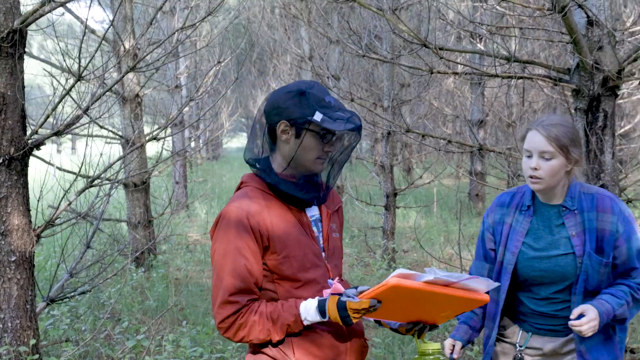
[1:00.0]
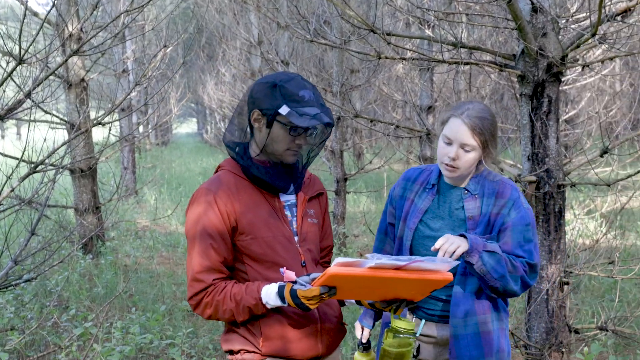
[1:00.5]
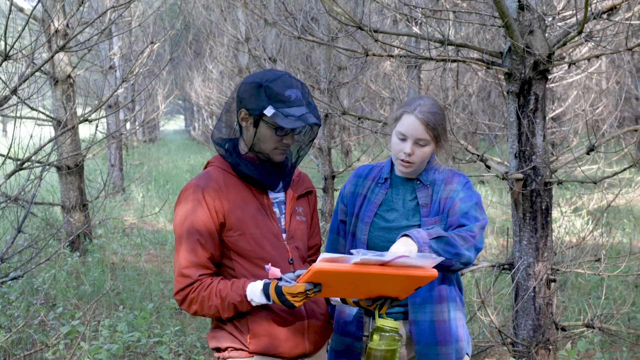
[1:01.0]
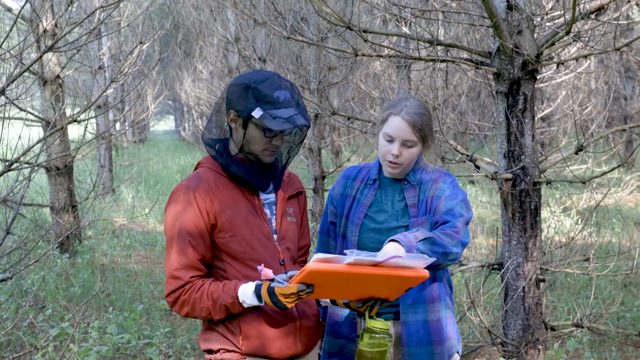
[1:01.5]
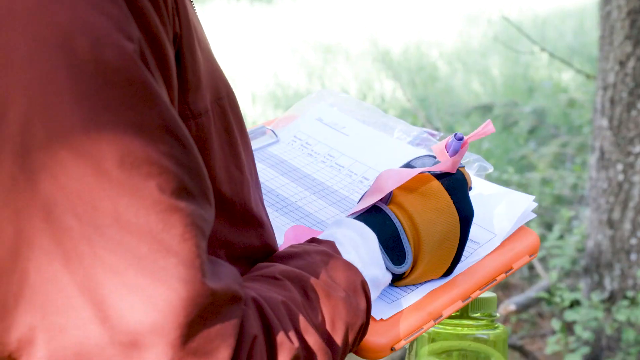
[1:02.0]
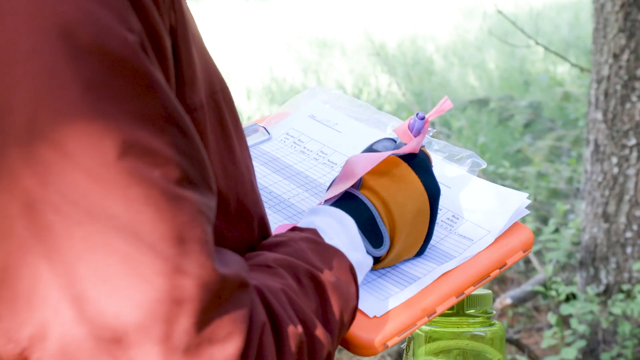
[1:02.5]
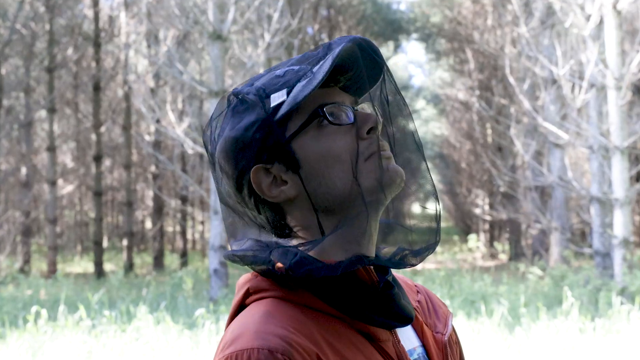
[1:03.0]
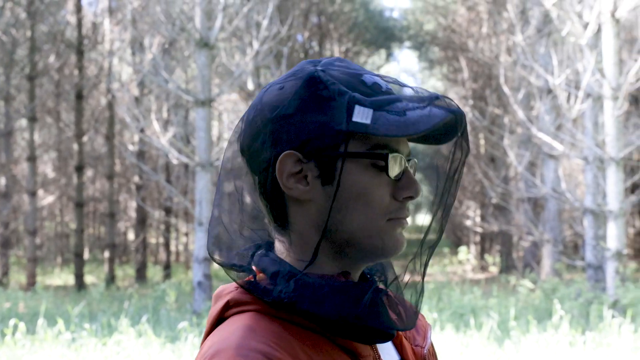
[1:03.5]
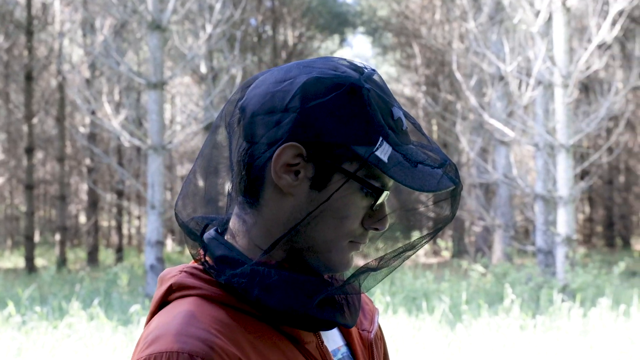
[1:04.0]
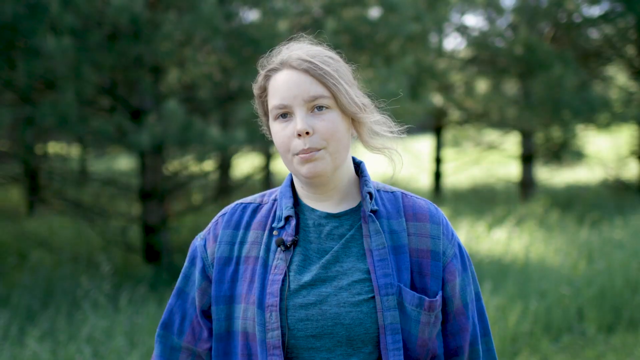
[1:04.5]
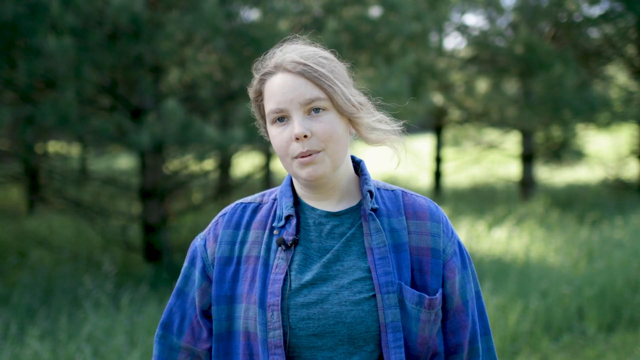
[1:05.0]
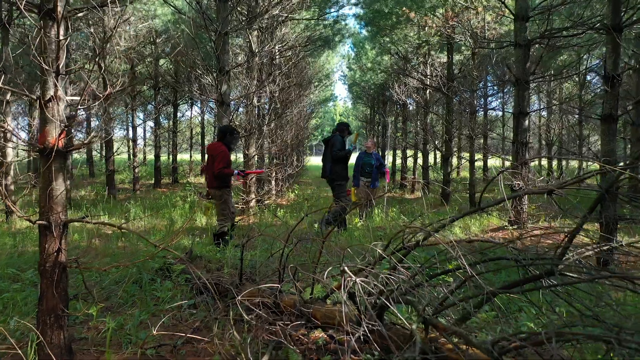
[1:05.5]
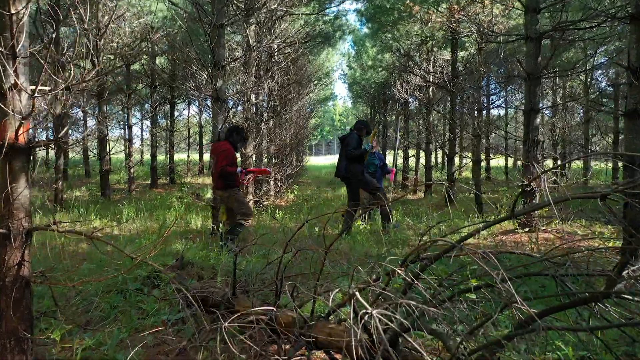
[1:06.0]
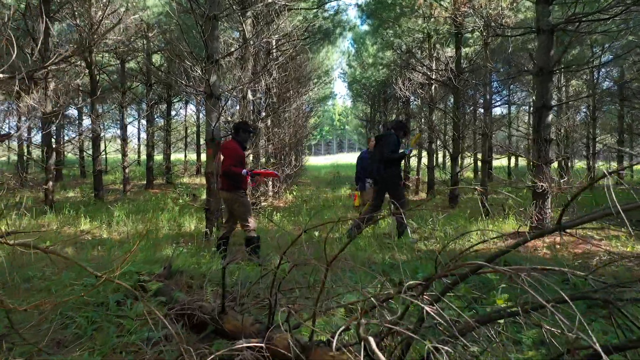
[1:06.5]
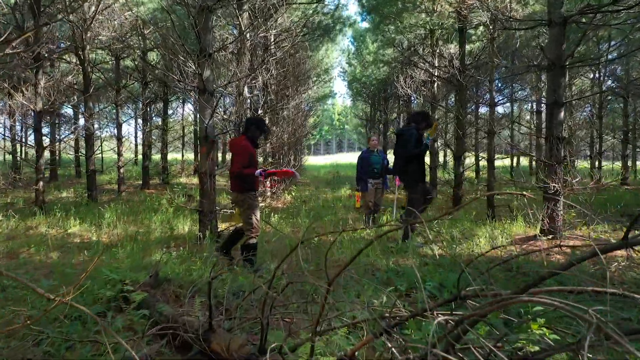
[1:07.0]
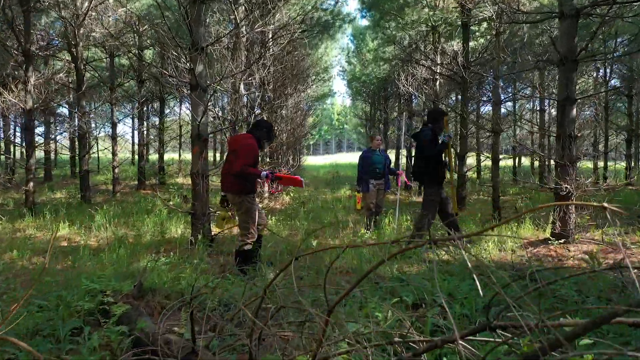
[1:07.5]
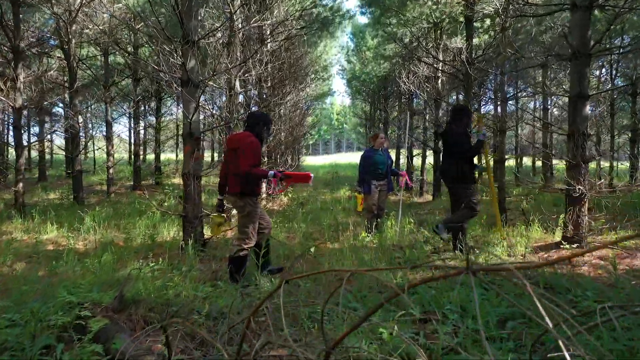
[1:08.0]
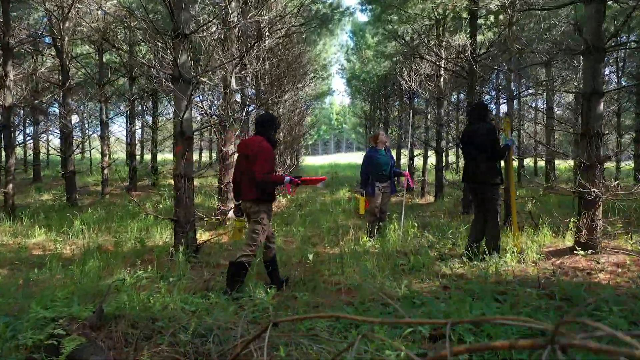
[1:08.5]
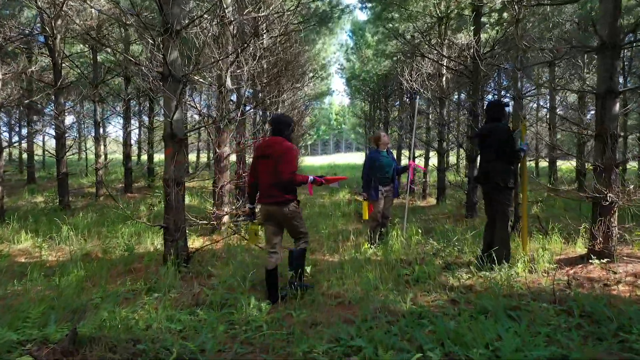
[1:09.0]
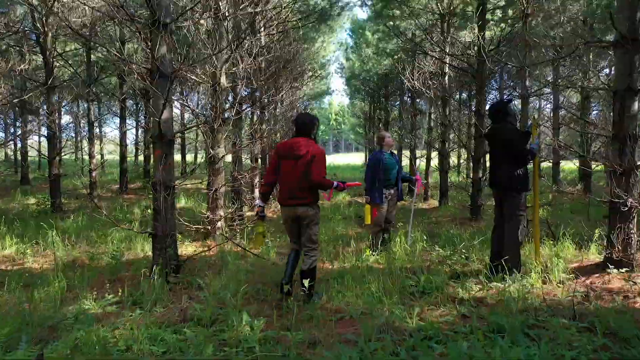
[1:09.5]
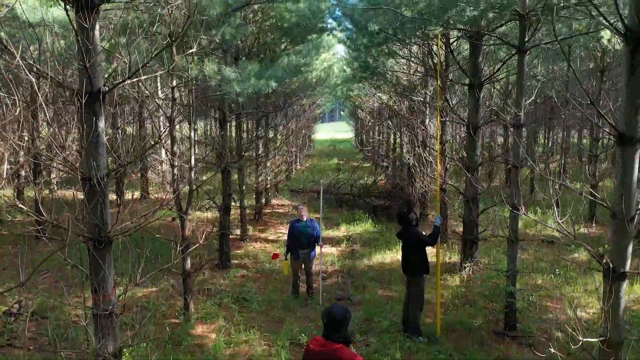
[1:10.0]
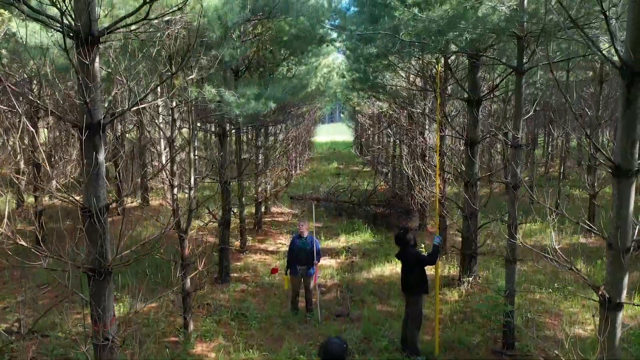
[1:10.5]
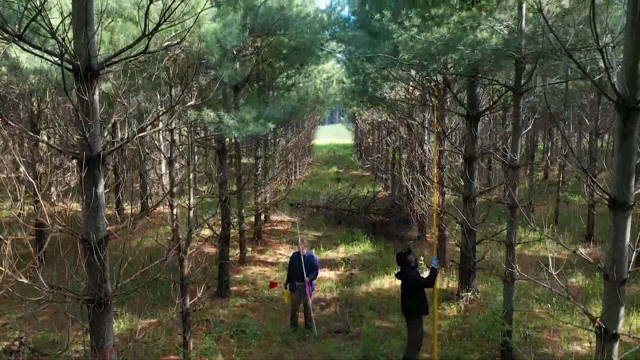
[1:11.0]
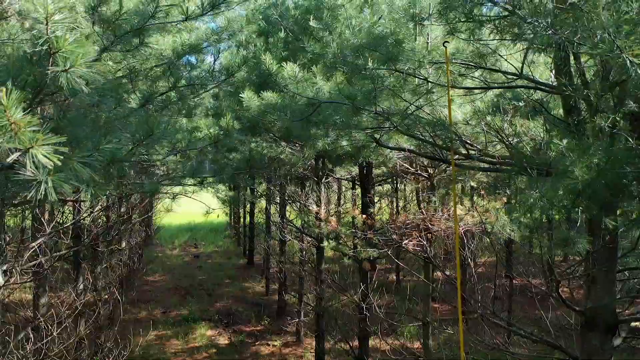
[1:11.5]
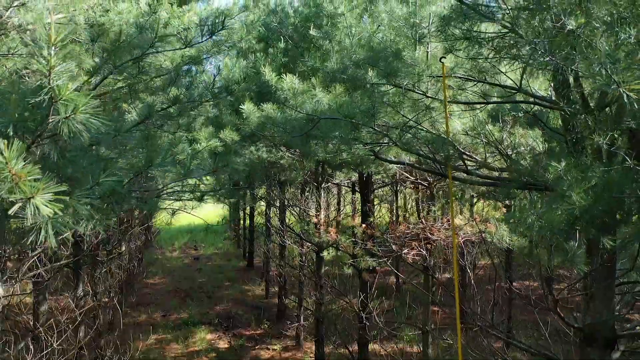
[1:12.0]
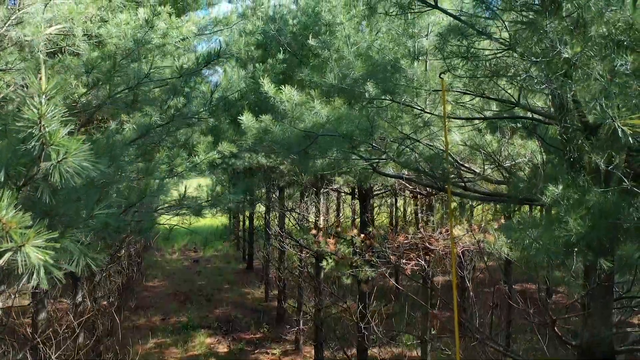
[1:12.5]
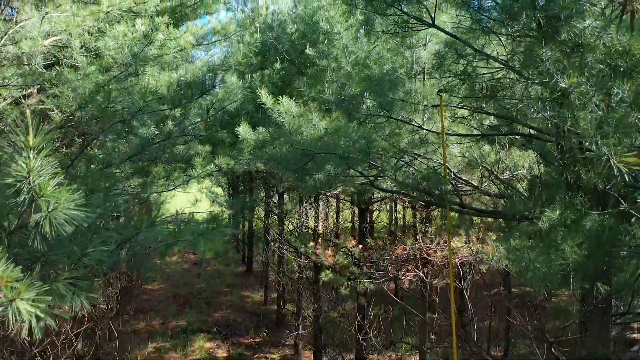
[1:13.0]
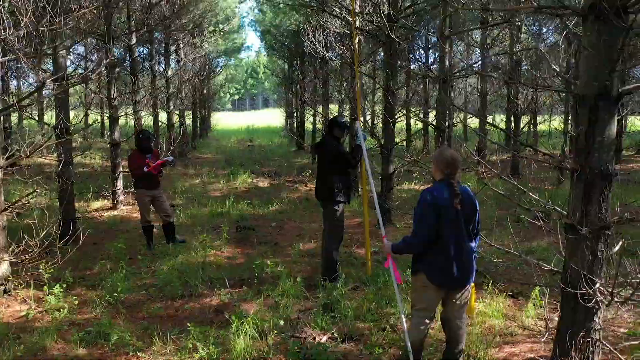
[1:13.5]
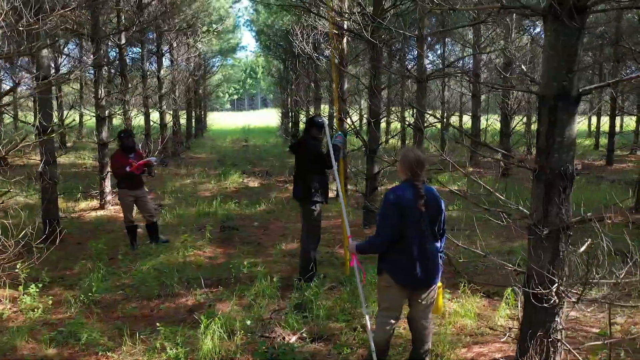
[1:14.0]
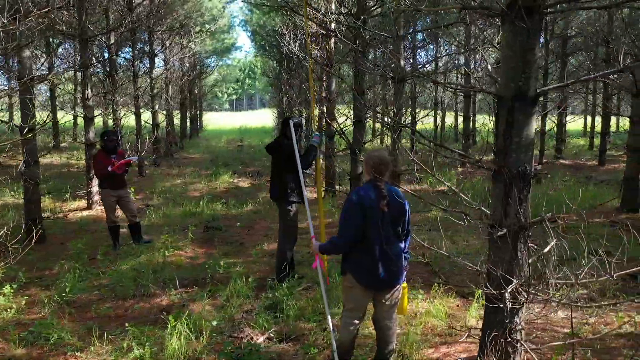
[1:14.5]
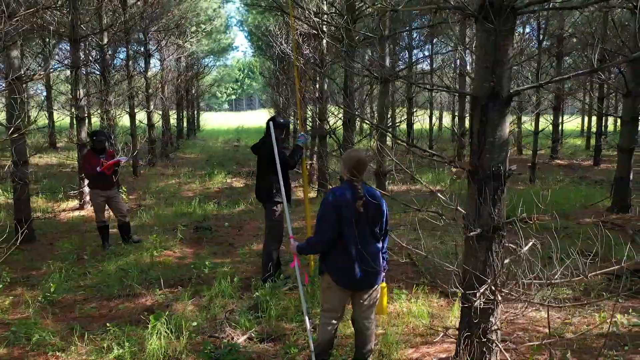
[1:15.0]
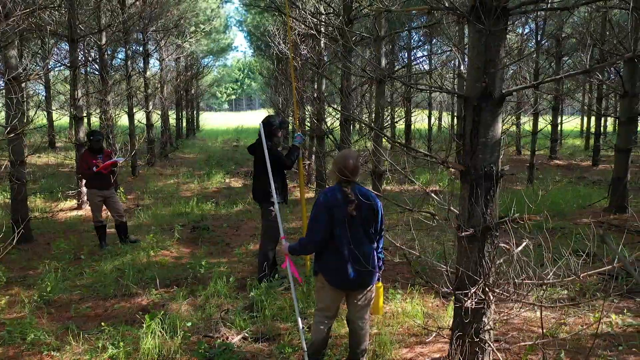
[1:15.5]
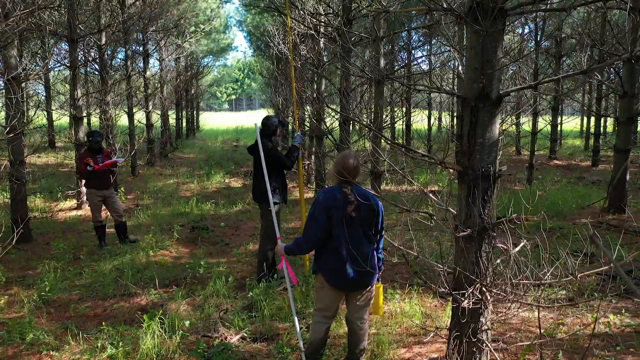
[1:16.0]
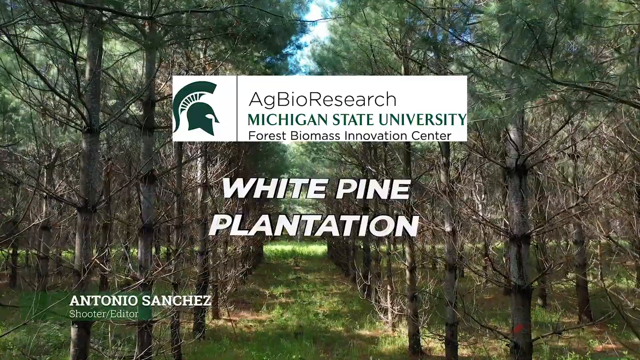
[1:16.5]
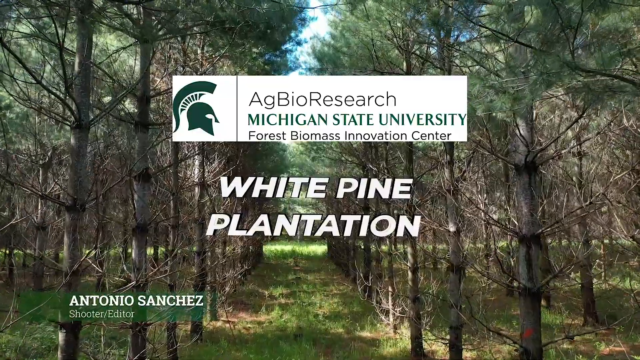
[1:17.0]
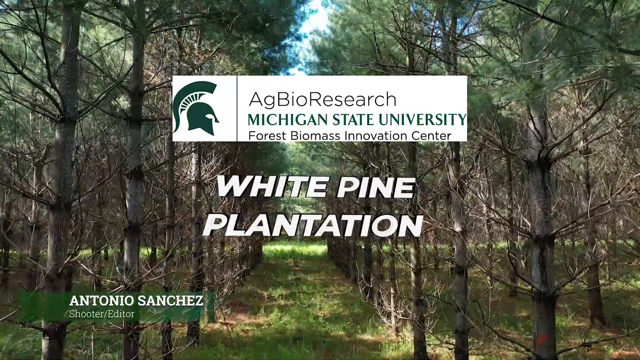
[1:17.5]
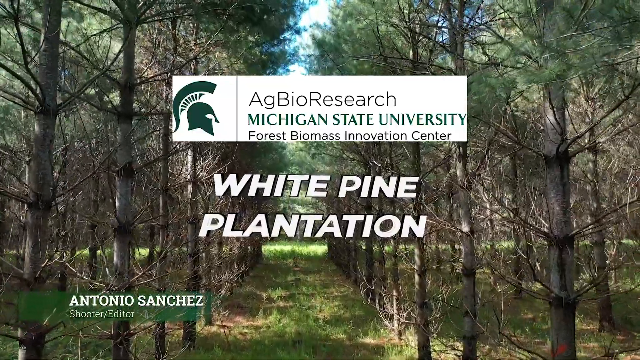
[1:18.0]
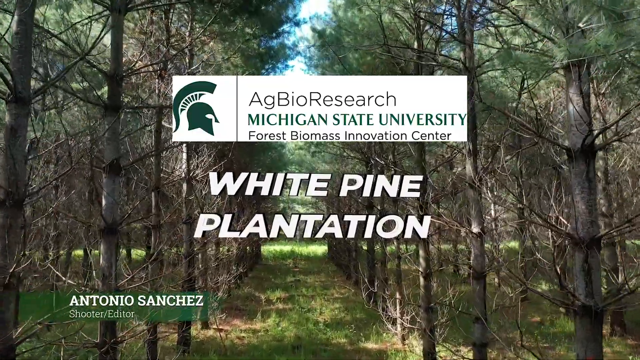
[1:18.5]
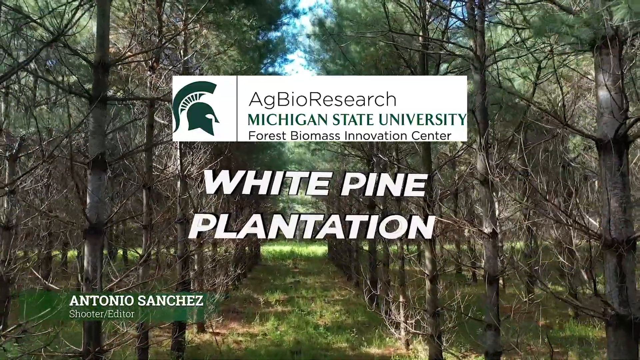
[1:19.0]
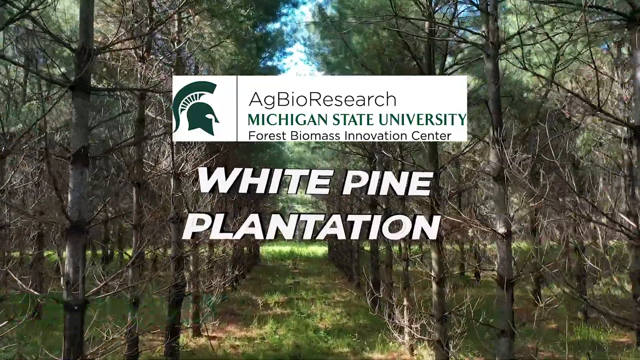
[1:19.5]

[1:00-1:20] A man in a red jacket stands in the middle with a bee net over his face, wearing gloves and holding an orange clipboard with both hands in front of him. On the right, a woman in a blue jacket looks down at the clipboard, facing toward the viewer. Two rows of trees and green grassy ground are in the background. The woman moves forward, points her left hand at the orange clipboard and talks about it. The perspective changes: a right hand with a pen writes on a piece of paper on an orange clipboard, with a red jacket on the left side. Next, a man wearing a bee net or a mosquito net over his head, glasses and a red jacket looks upward and to the right. Another scene shows a chubby girl with blonde hair blown by the wind to the right, wearing a blue collared shirt with a blue t-shirt underneath, talking to the viewer. Then three people walk along a green path leading away from the viewer, with rows of trees on the left and right; the view moves forward as they walk around, poking a yellow stick upward and measuring the trees. The camera pans from left to right as the three stand on the path doing something with the trees. An outro screen shows the path with trees on the left and right, a white banner reading "AG BioResearch, Michigan State University Forest Biomass Innovation Center," white text at the bottom reading "White Pine Plantation," and at the bottom left "Antonio Sanchez shooter/editor." The view moves through the trees as the text grows bigger.